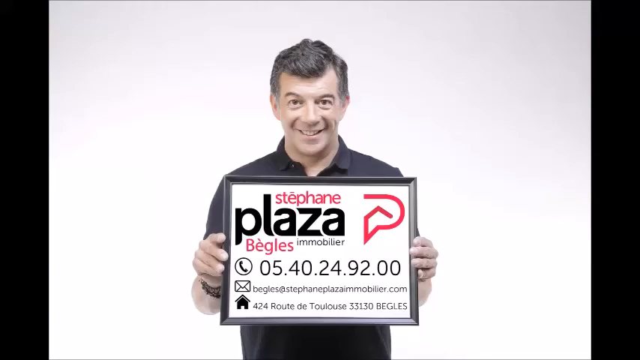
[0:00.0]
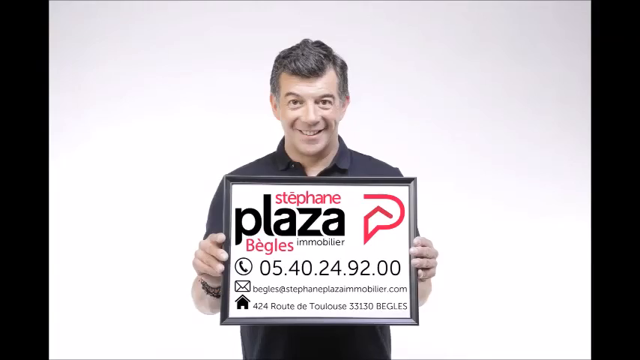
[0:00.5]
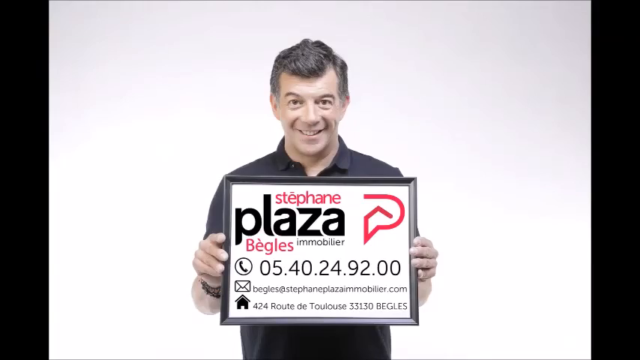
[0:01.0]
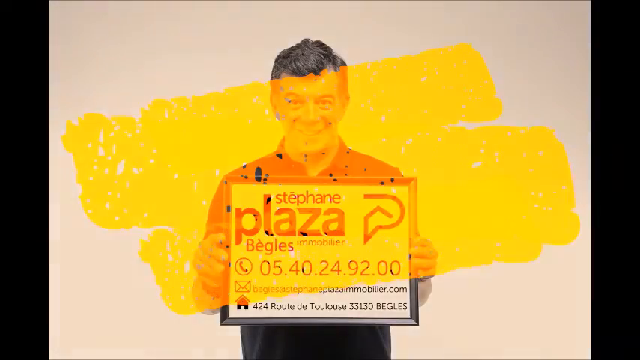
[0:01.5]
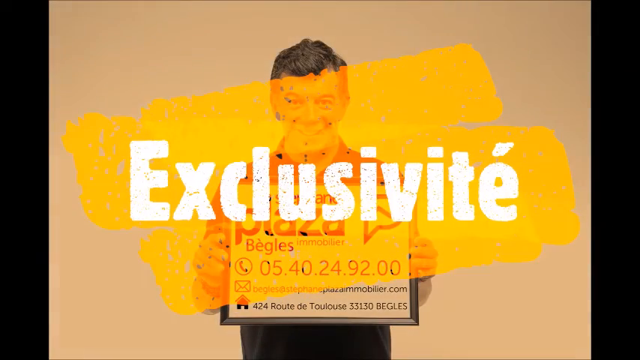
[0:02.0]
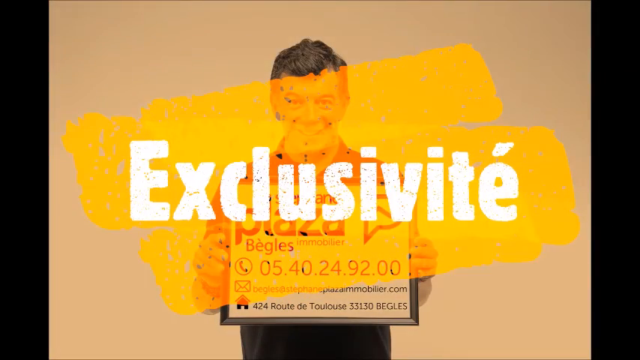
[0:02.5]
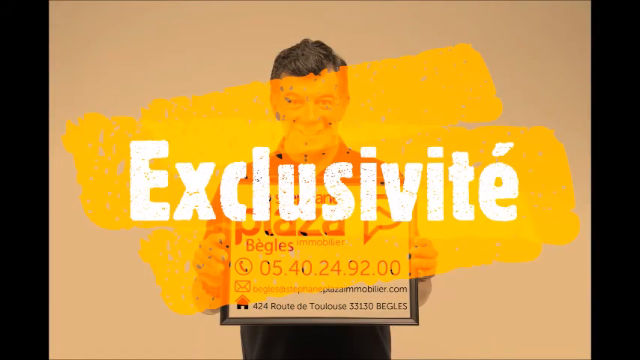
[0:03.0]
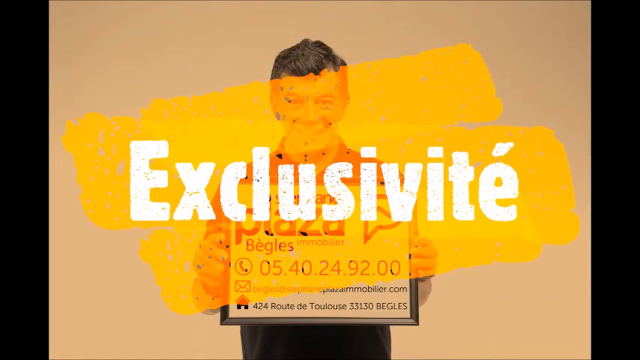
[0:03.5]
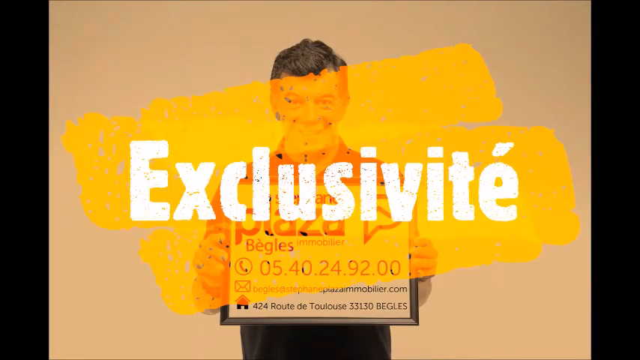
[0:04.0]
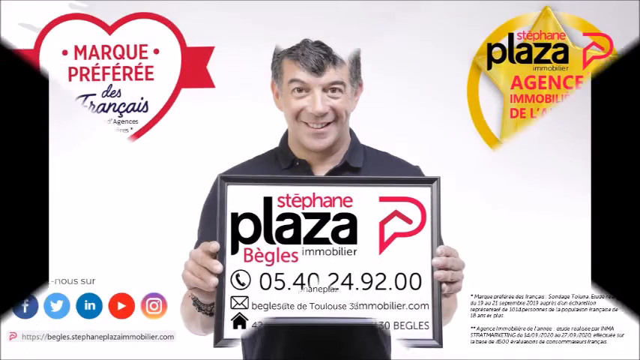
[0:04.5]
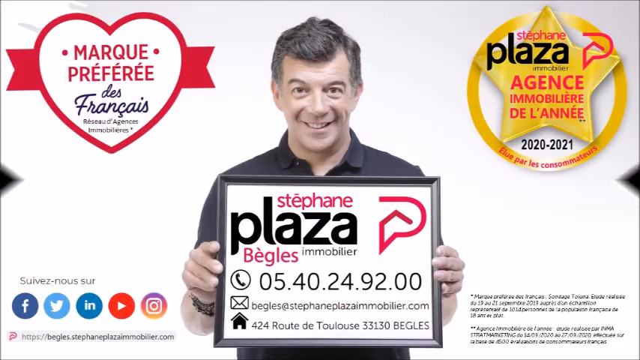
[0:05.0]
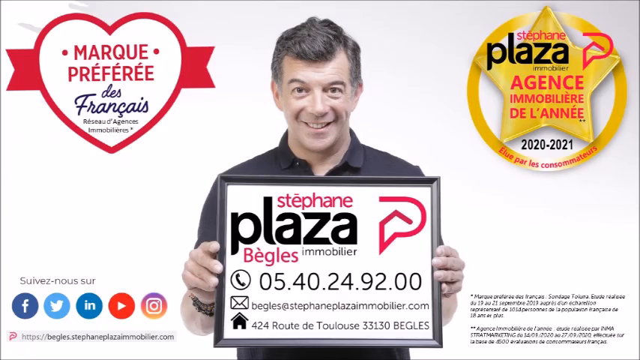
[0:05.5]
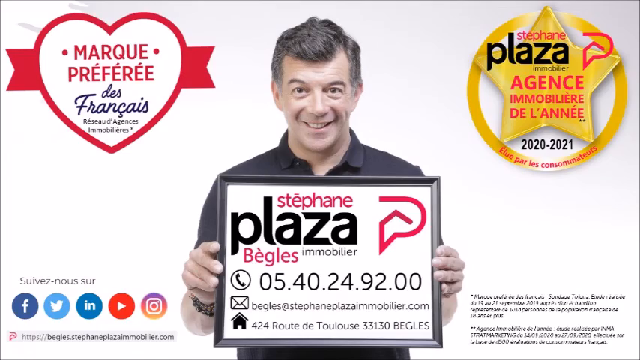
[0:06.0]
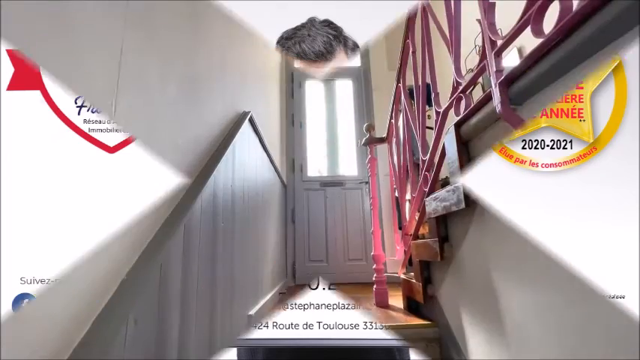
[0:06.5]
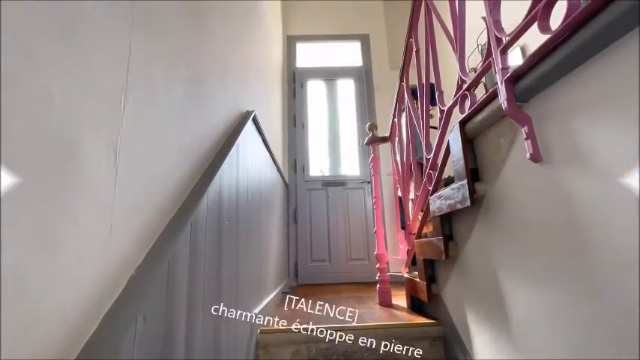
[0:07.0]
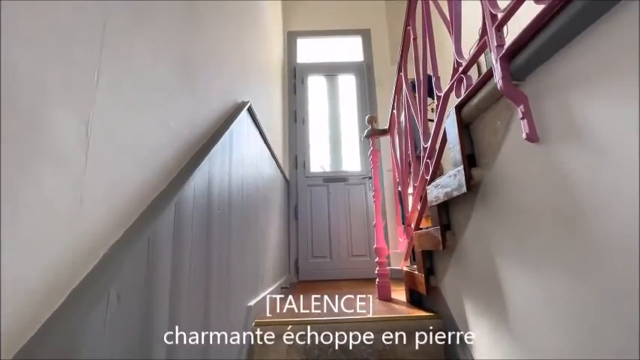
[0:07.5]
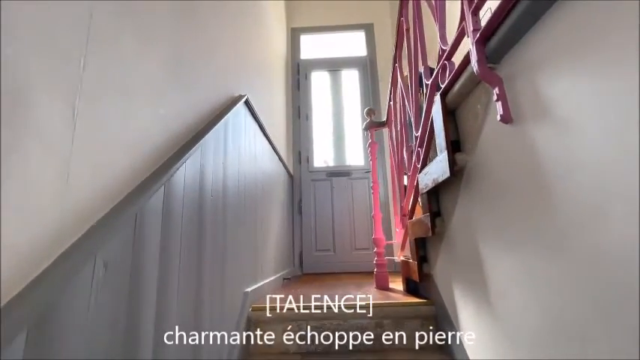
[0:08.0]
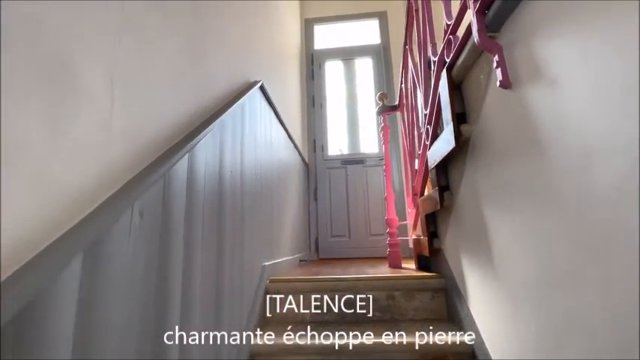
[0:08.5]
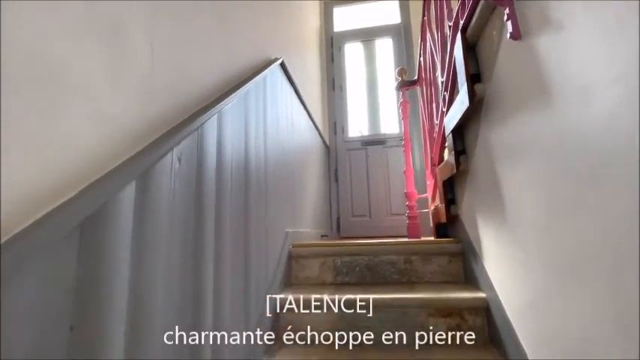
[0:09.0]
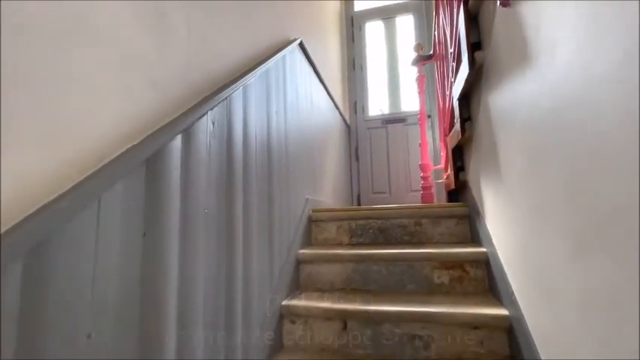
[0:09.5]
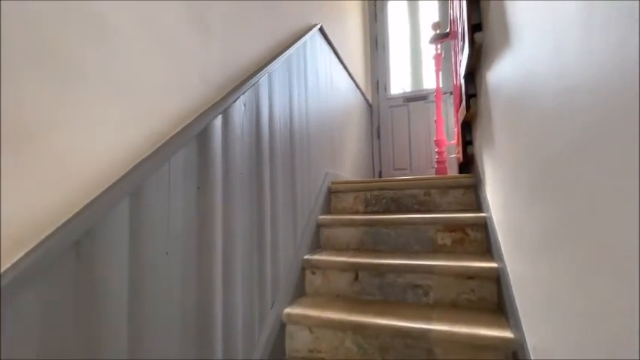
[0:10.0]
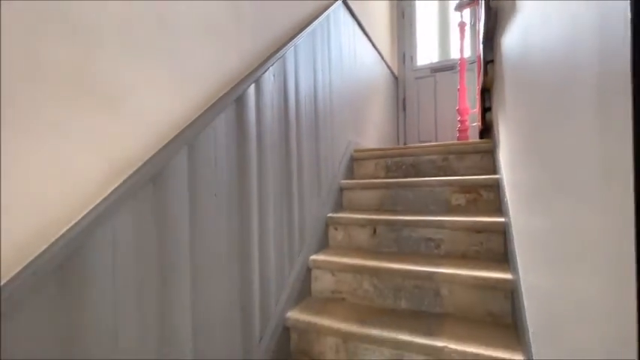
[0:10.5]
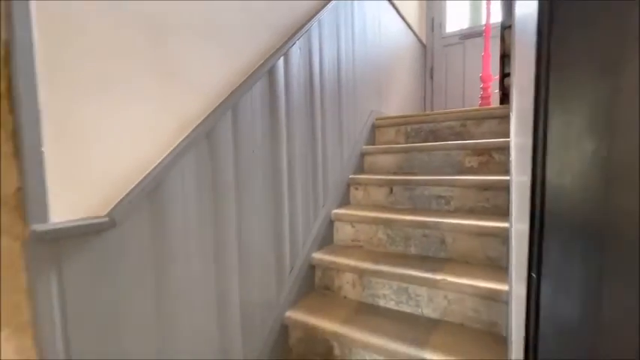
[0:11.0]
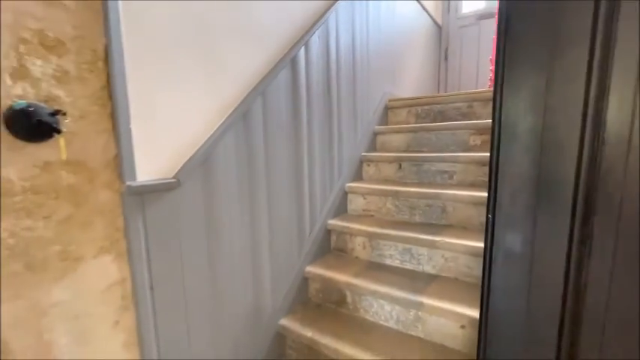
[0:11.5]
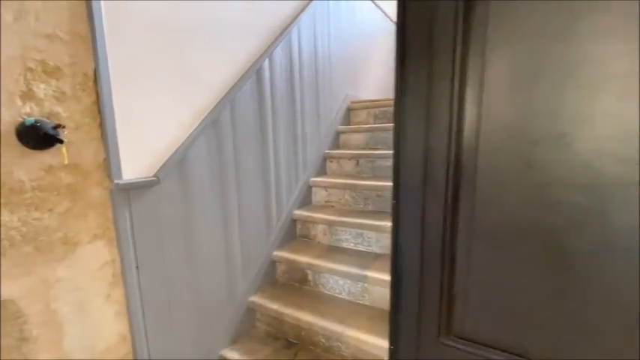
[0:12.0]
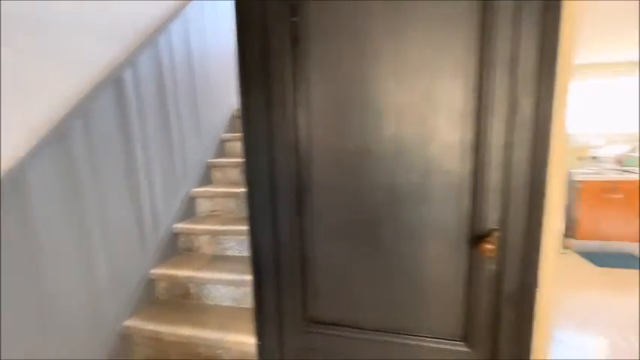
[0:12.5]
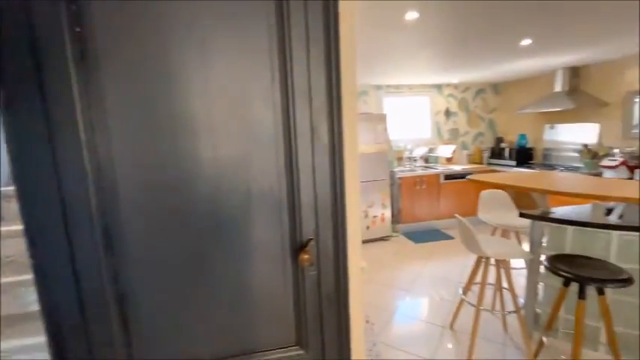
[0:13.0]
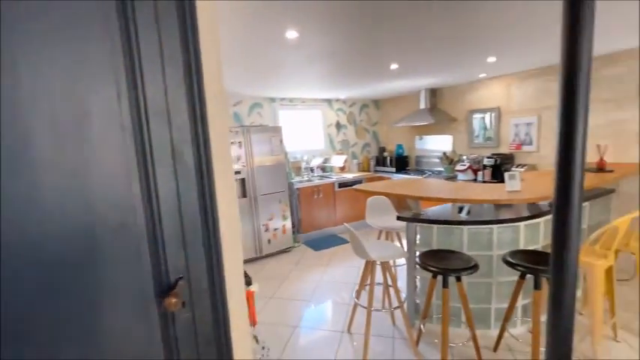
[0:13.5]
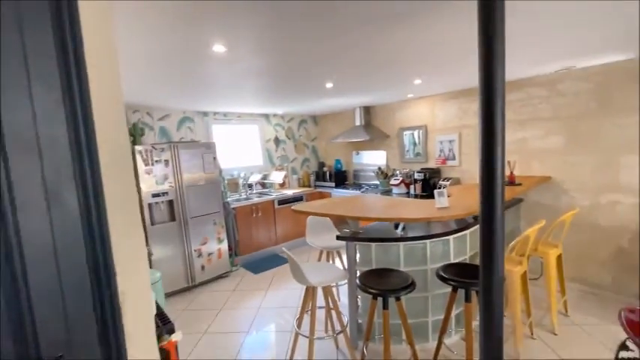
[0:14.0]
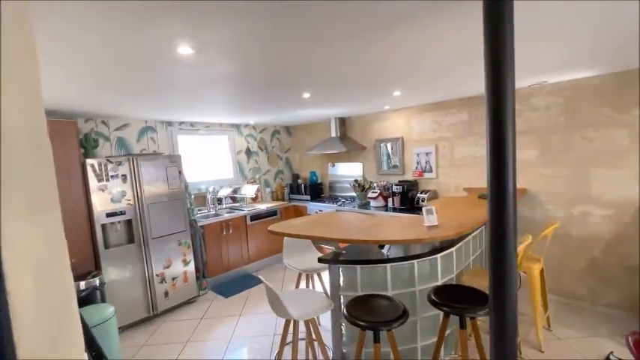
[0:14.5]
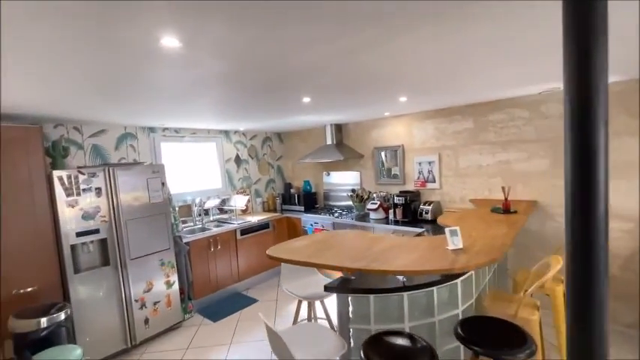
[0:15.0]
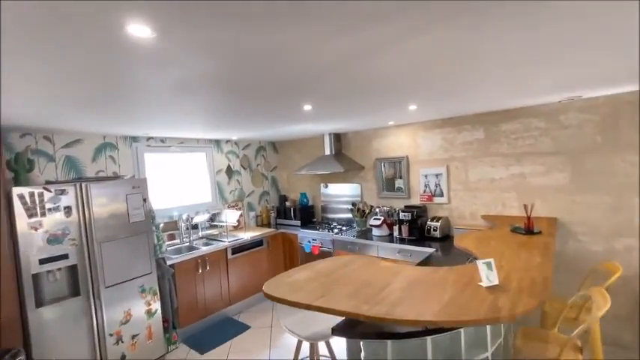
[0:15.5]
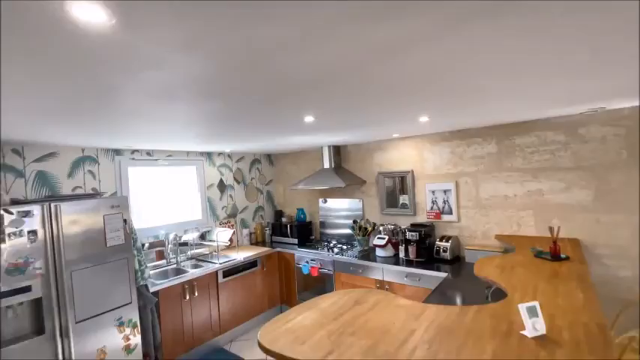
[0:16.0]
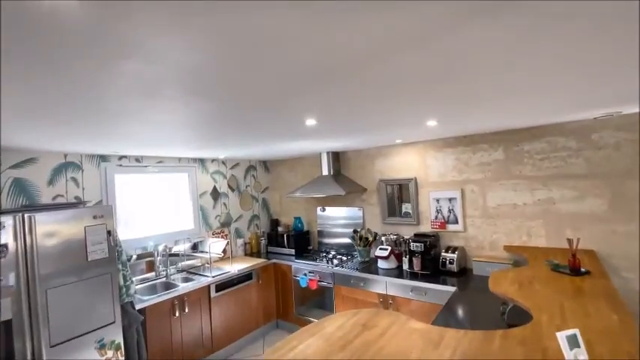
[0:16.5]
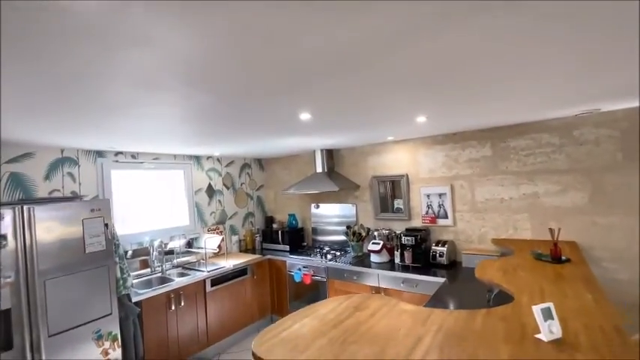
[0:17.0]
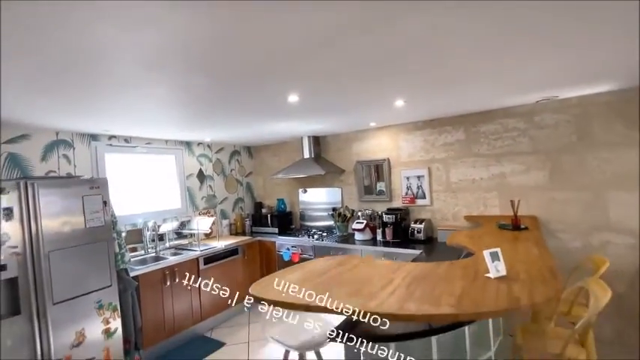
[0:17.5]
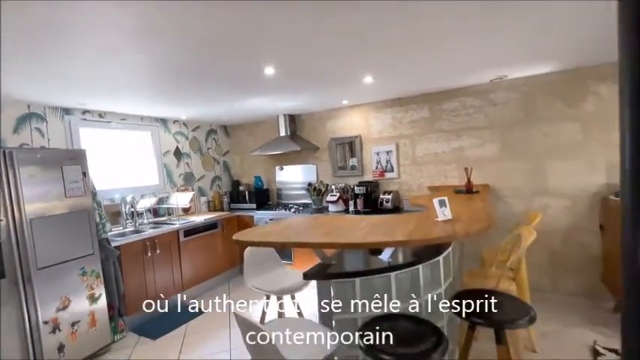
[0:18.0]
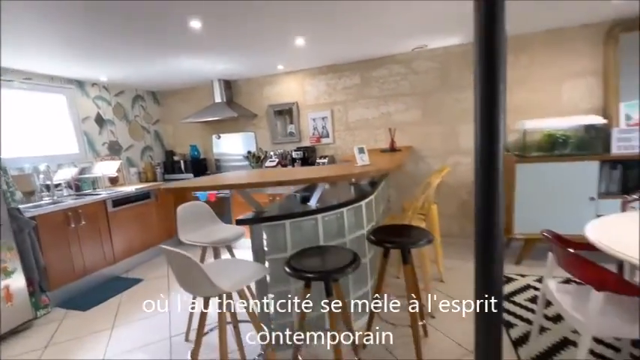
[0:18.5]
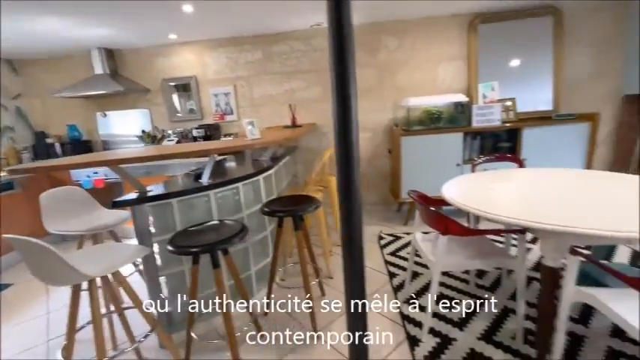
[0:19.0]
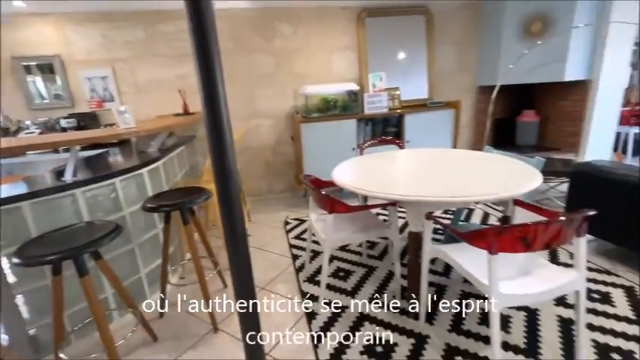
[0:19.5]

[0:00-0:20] The video begins with a man holding a sign. He wears a blue polo shirt and has graying hair that is somewhat spiky in the center. He is smiling, and the sign he holds shows the name of a company and its contact information, apparently in a foreign language. More text, also in a foreign language, appears over him, and it seems to have yellow highlighting behind and around it. Two quick transitions lead into a stairway. It appears to be footage from someone holding a camera behind them as they walk downstairs. The camera goes down the cramped stairway and then turns right into a kitchen. The kitchen has a bar on the right side, and to the left of that a counter runs along the corner. There is an oven on the right side and a sink on the left side, with perhaps a dishwasher that blends into the cabinet below. To the left of the sink is a stainless steel refrigerator with magnets on it. The camera appears to go up against a glass door and then turns right to show a small dining area and a living room.